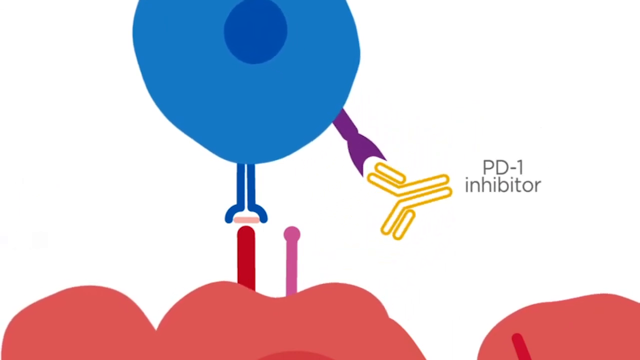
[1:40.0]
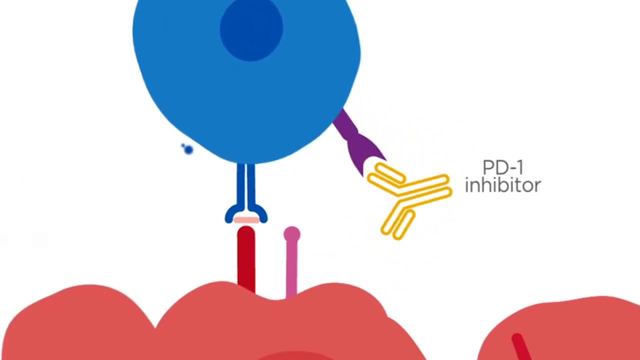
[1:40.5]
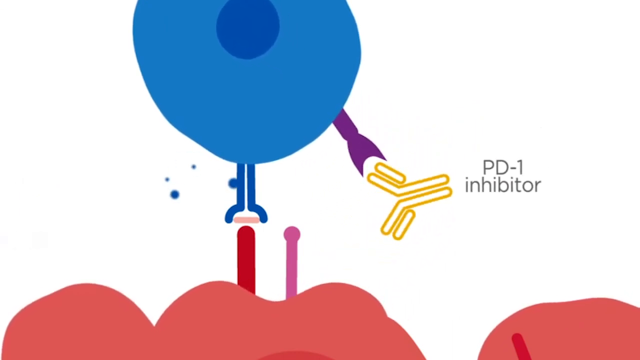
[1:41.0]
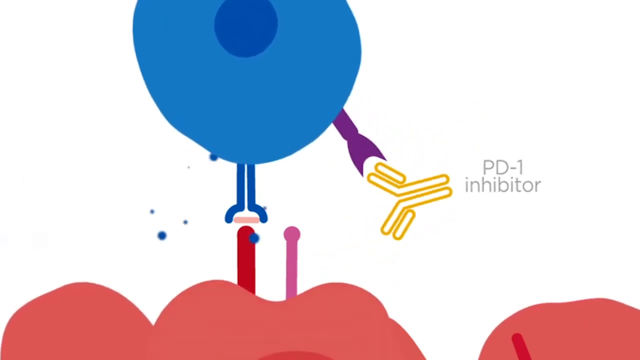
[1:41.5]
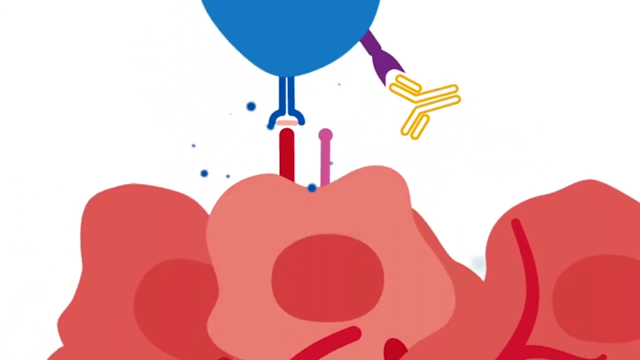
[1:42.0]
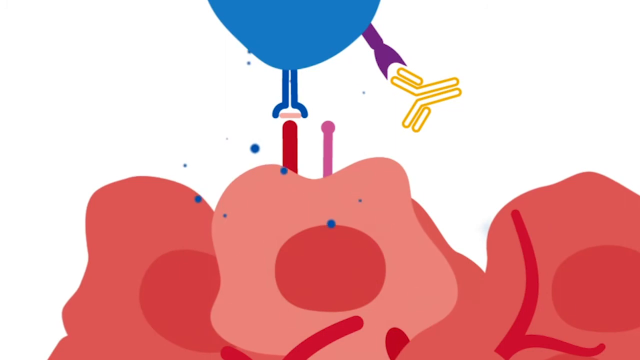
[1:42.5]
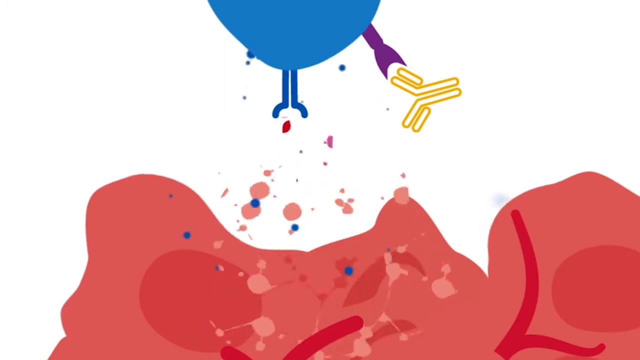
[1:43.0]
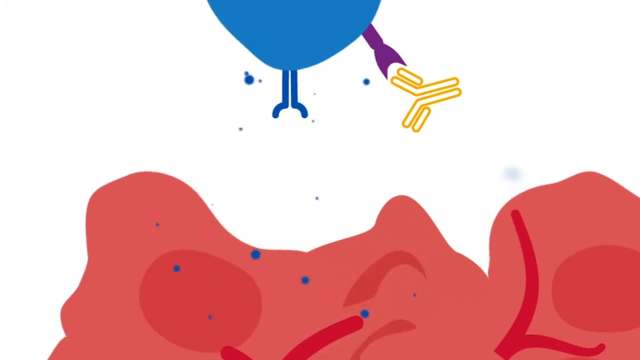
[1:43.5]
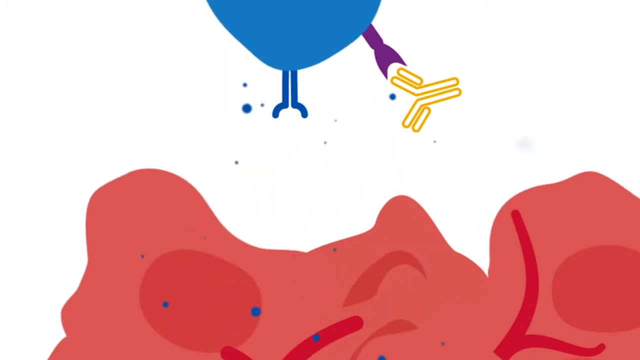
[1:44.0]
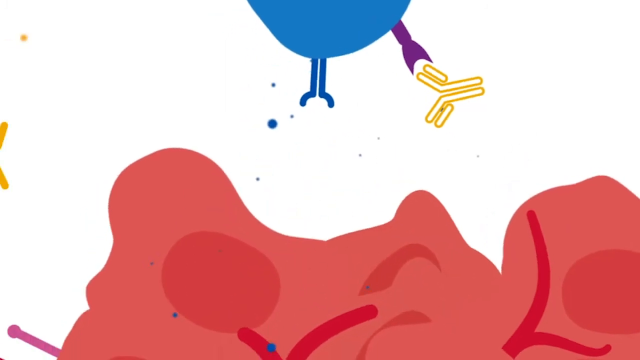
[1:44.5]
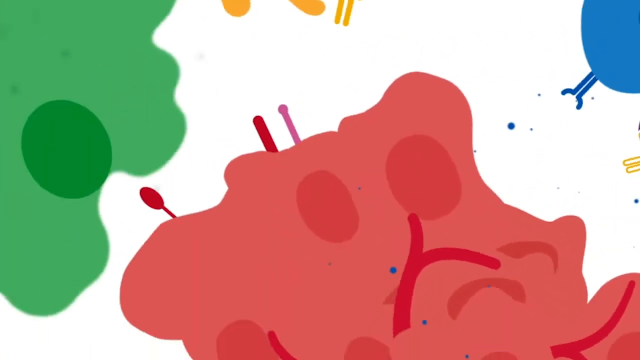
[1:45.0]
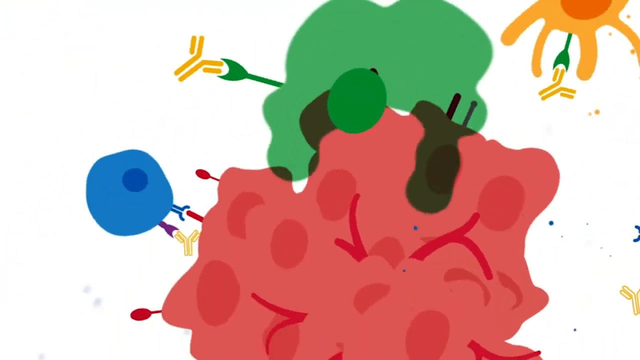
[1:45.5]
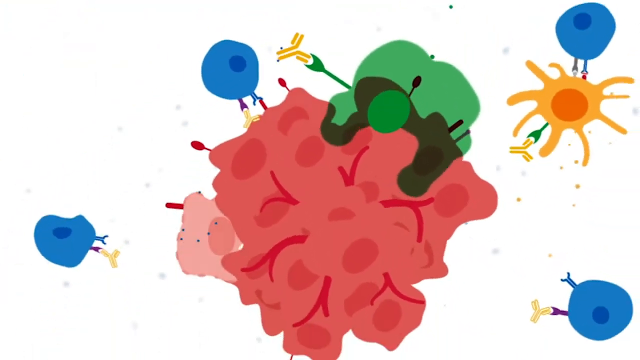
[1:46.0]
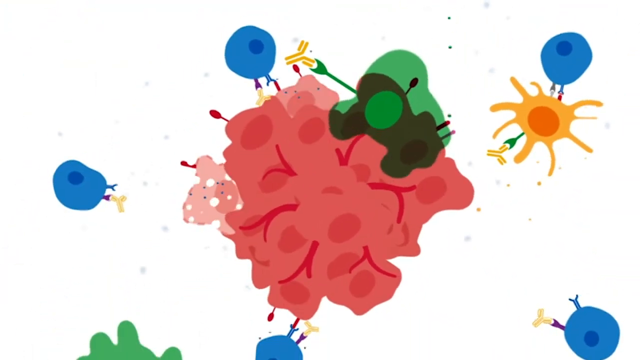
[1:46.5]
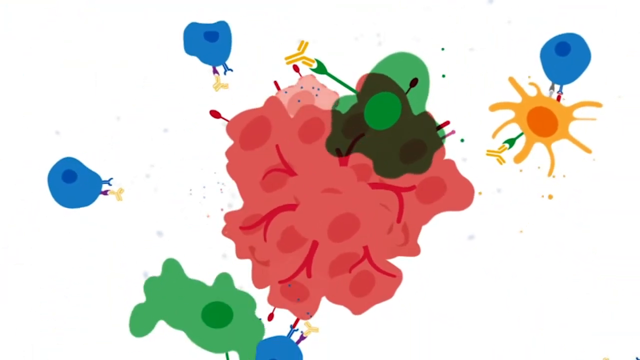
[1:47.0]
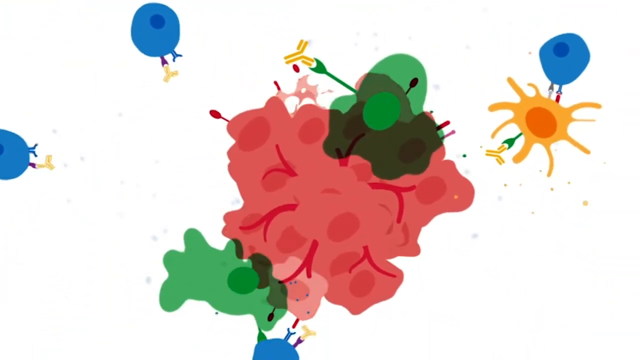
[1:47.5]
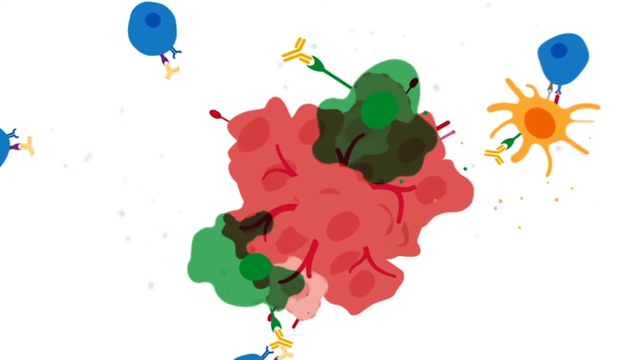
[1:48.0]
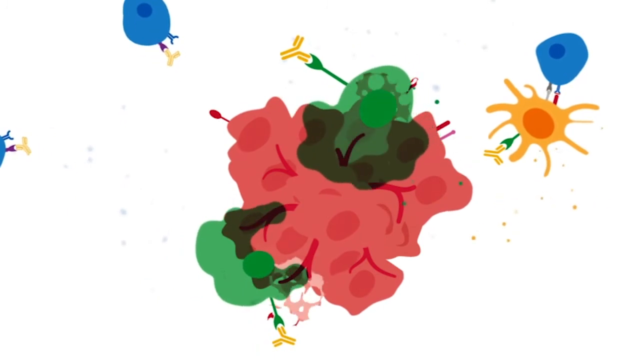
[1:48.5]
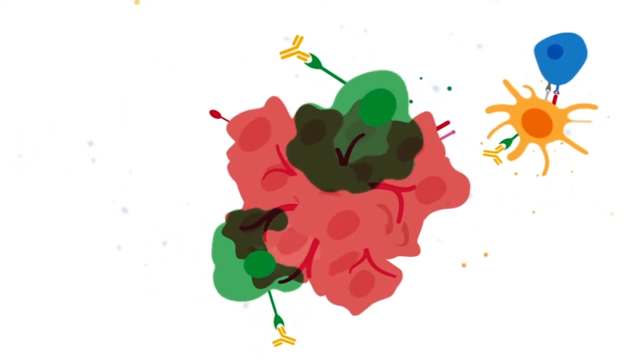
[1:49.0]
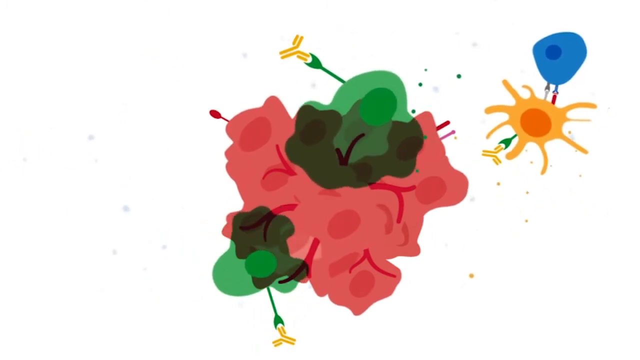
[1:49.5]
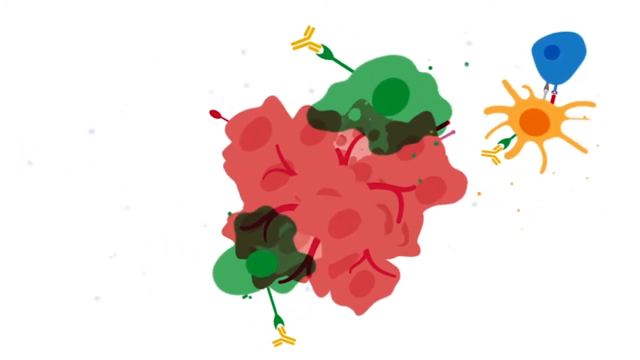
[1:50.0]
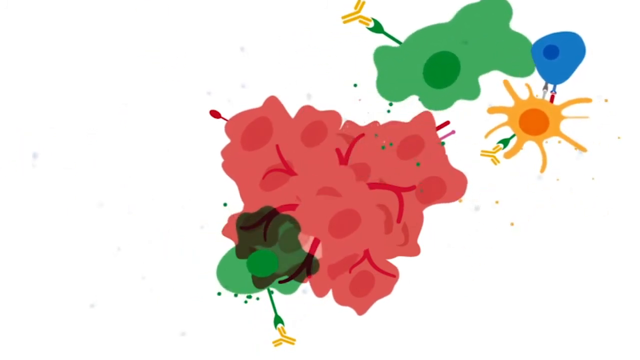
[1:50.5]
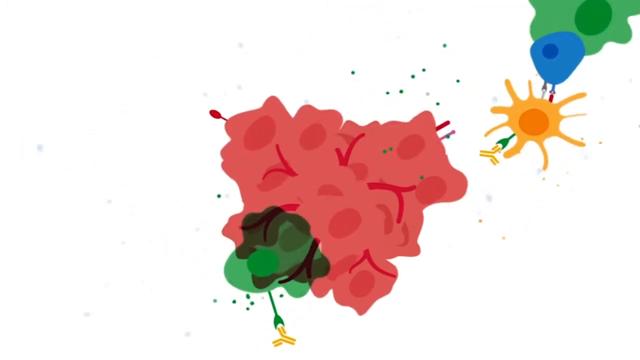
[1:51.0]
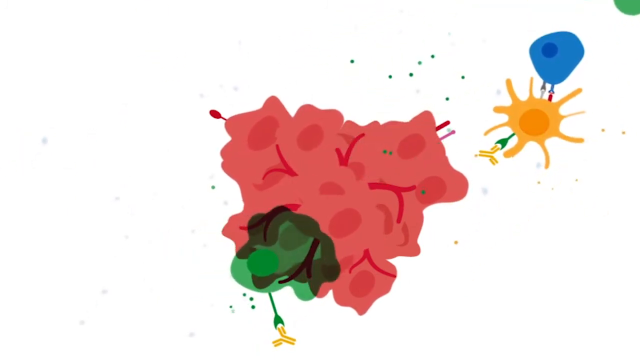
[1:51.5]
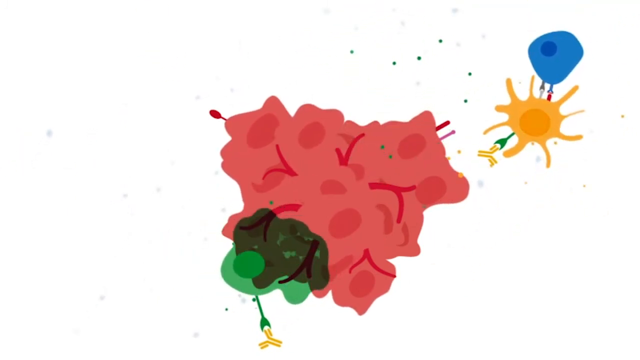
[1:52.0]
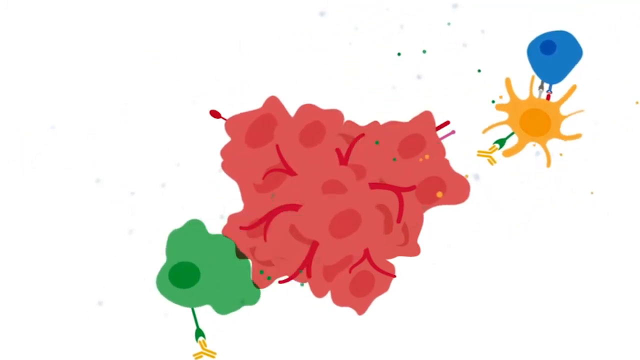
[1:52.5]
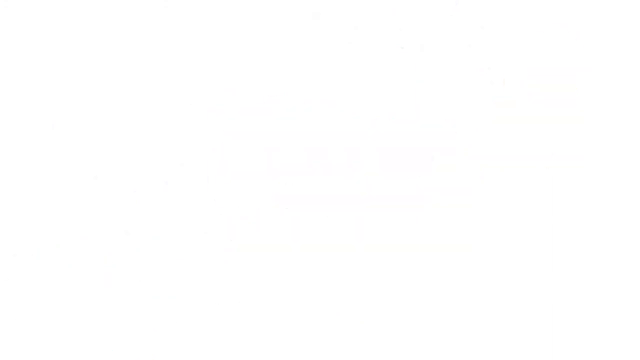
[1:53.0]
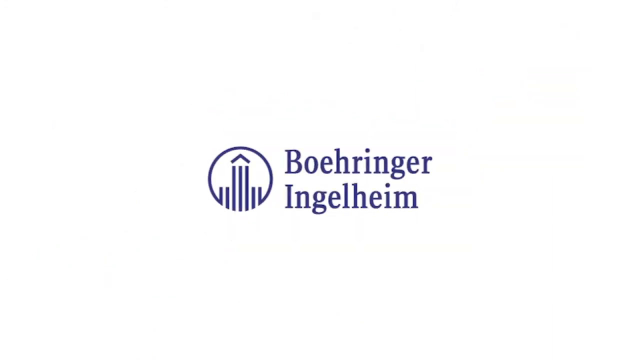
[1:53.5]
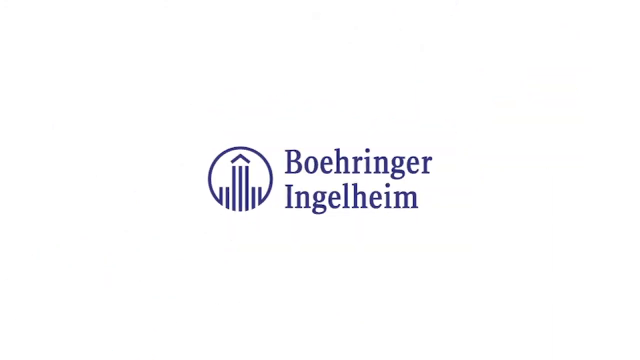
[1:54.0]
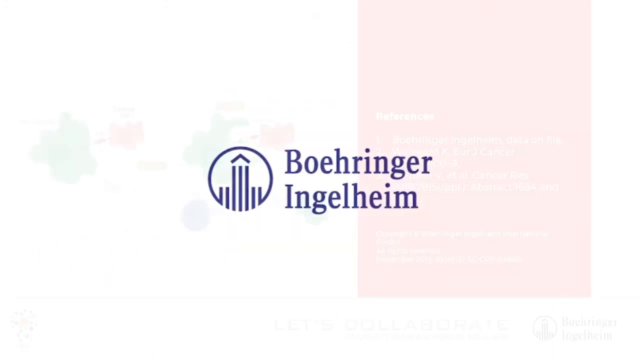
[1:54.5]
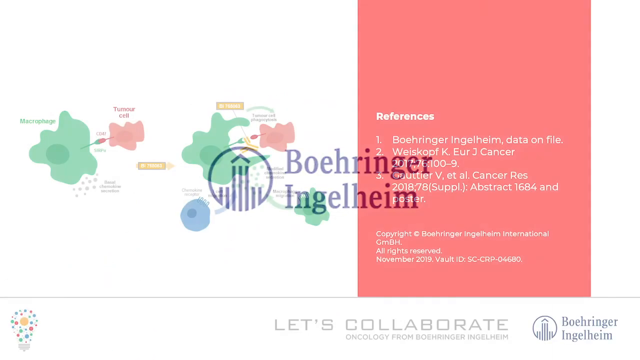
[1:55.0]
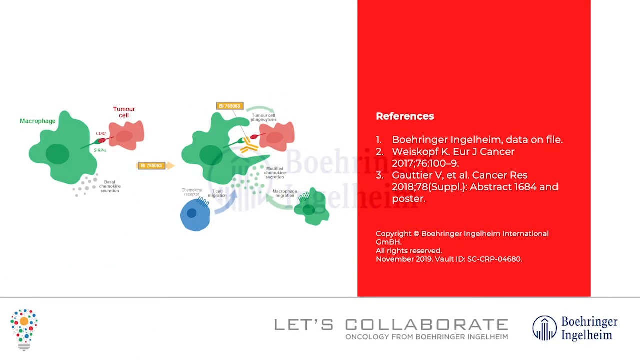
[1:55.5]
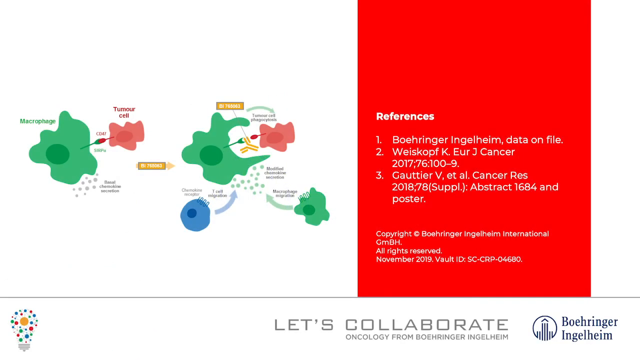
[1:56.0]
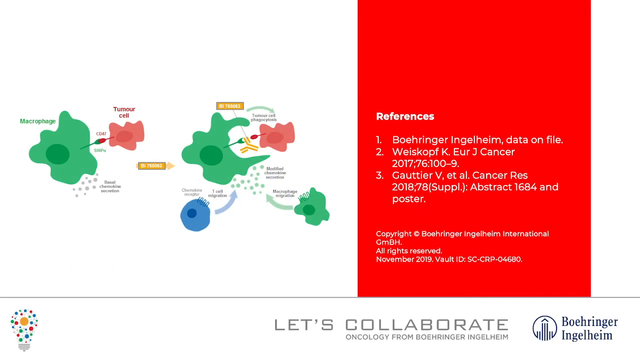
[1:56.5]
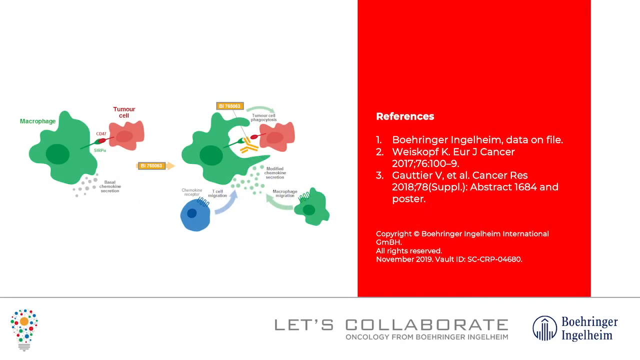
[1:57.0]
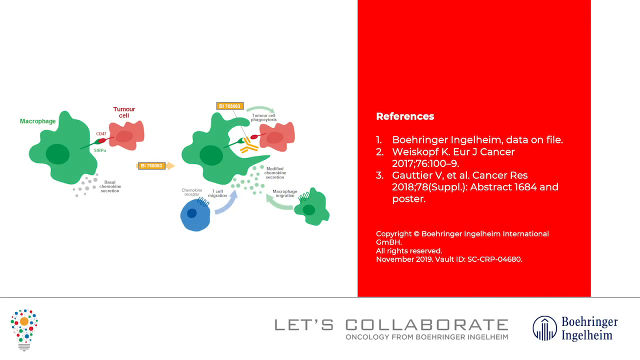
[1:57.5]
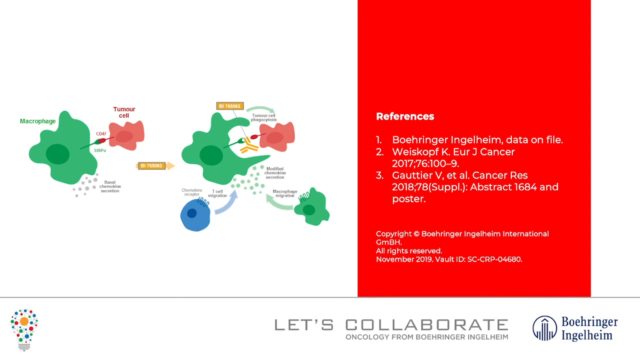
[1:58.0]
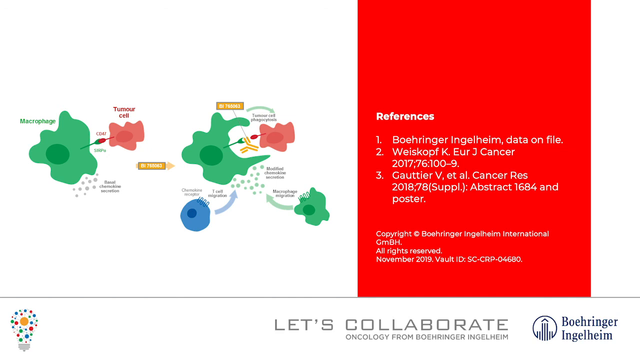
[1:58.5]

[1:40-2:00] Text listing items including "MHC, PD-1, PD-L1" is shown as four elements acting on the tumor and the antigen to help make the tumor vanish. Information about a PD-1 inhibitor follows, and then references and a structure appear.